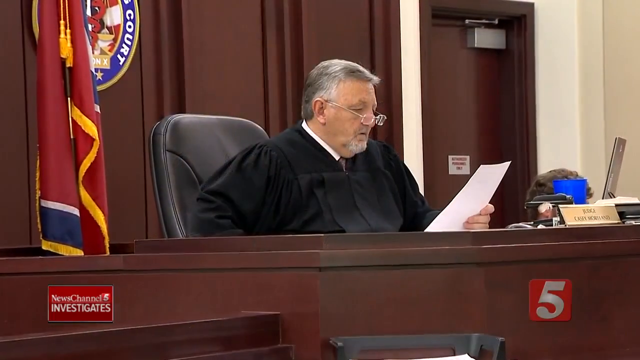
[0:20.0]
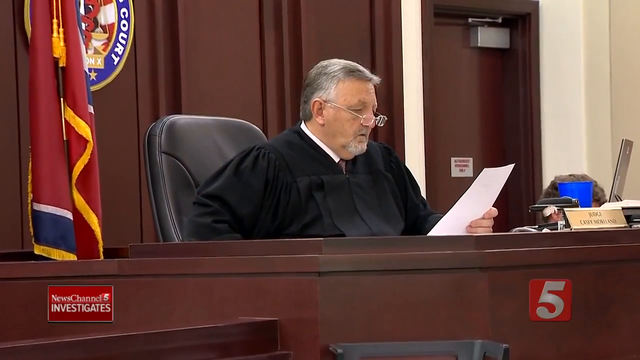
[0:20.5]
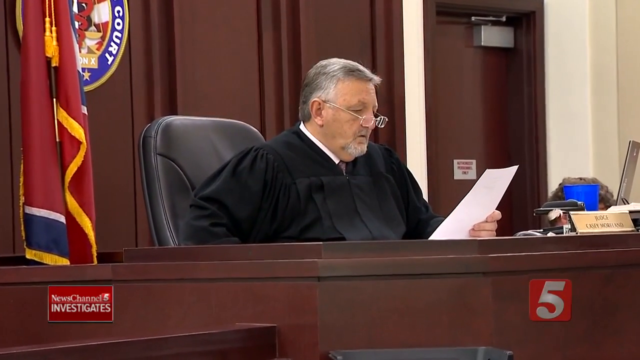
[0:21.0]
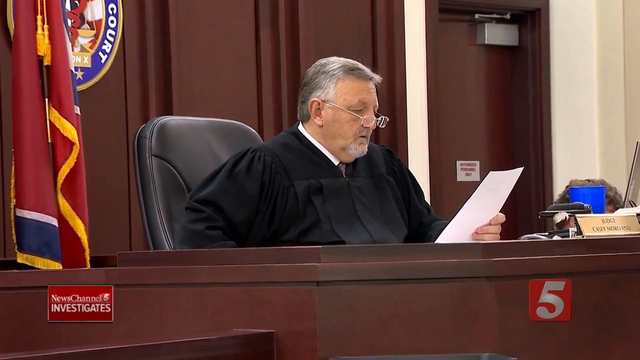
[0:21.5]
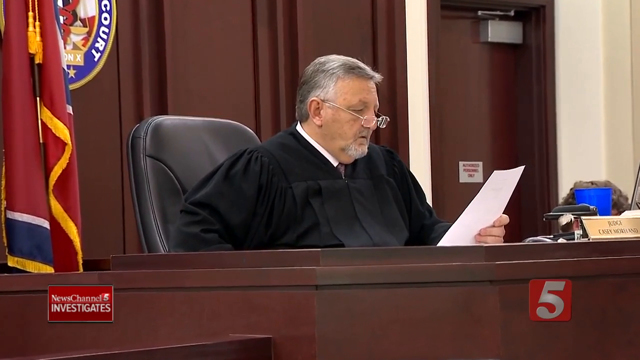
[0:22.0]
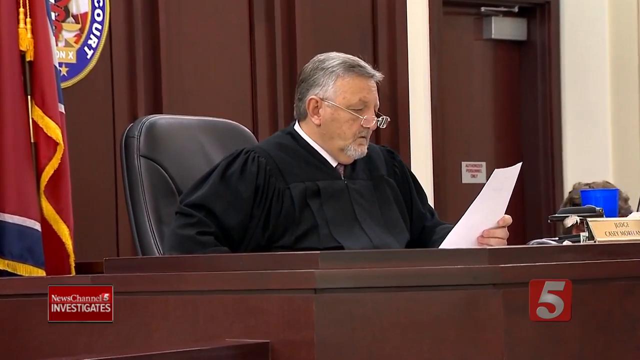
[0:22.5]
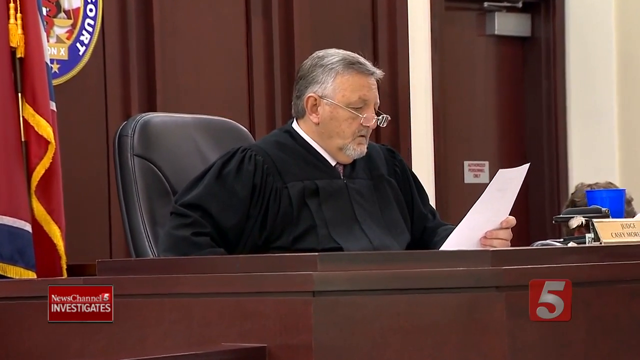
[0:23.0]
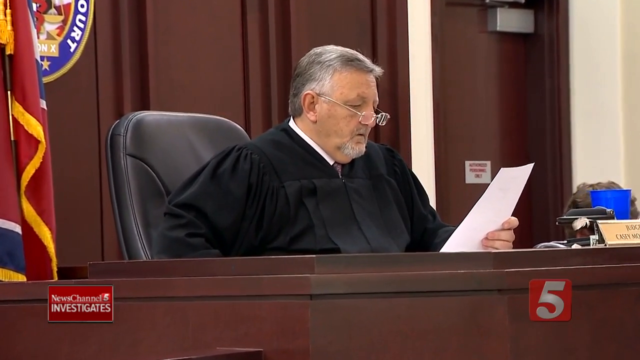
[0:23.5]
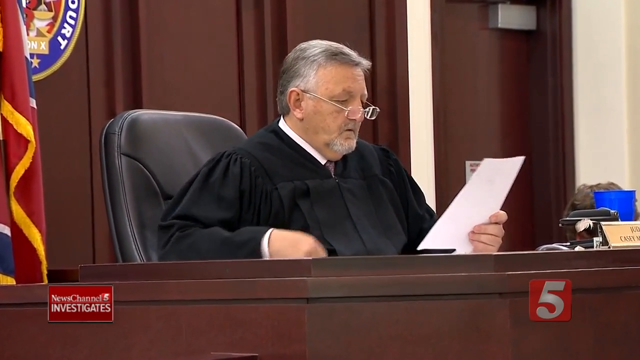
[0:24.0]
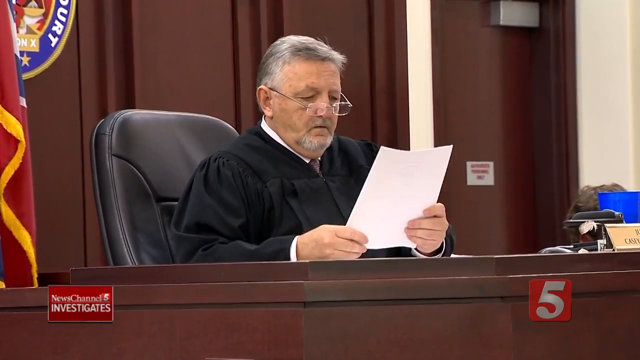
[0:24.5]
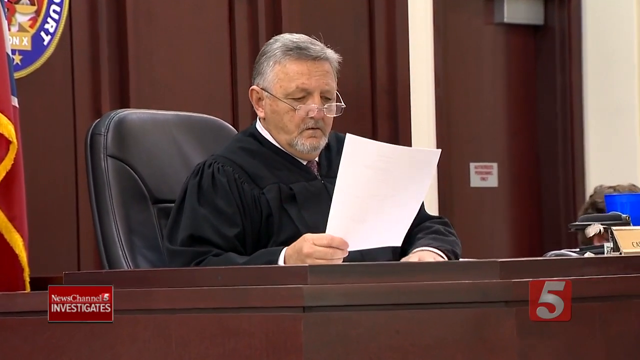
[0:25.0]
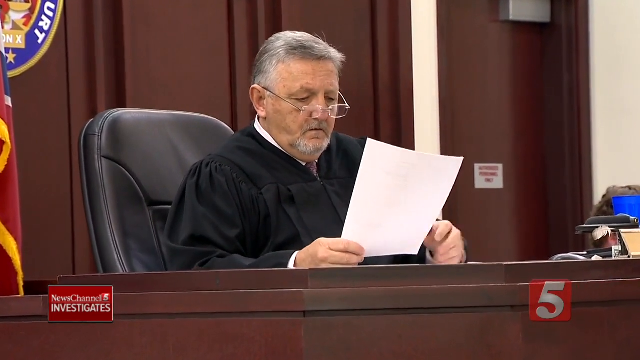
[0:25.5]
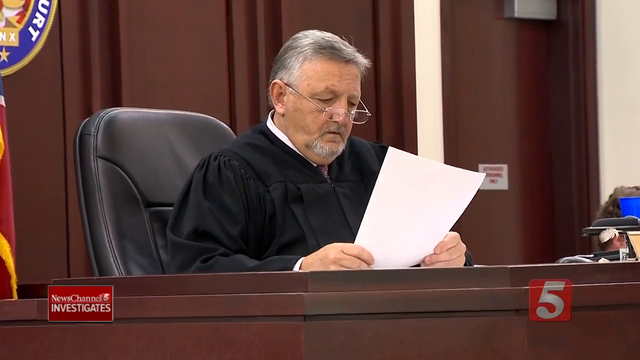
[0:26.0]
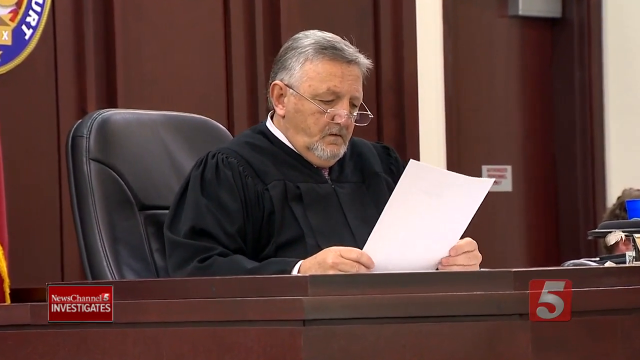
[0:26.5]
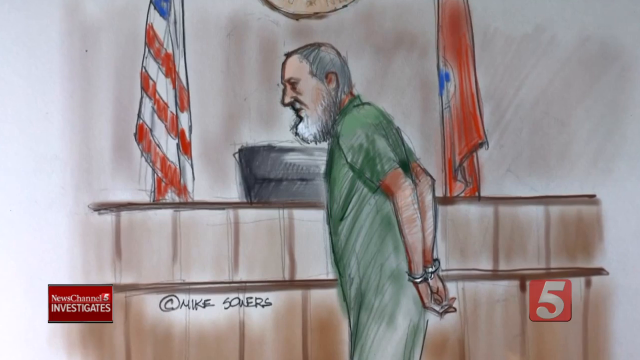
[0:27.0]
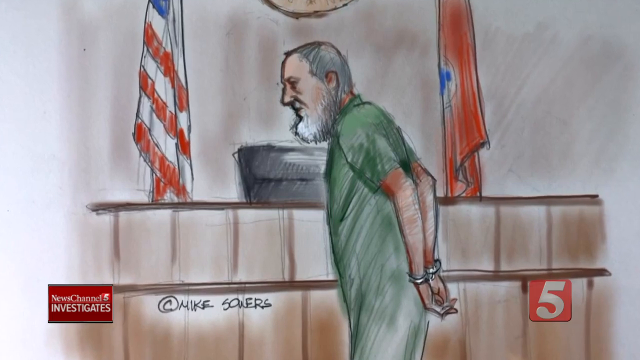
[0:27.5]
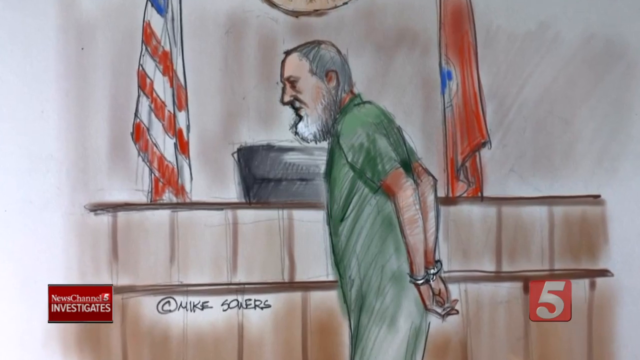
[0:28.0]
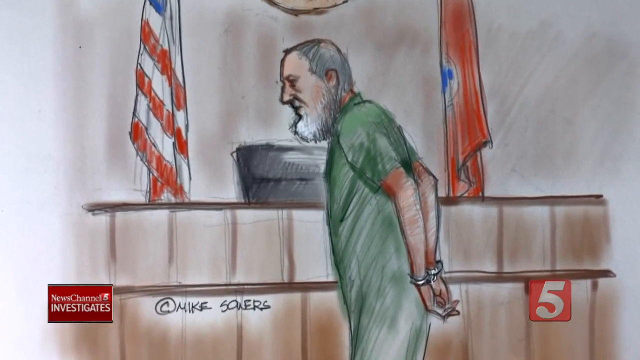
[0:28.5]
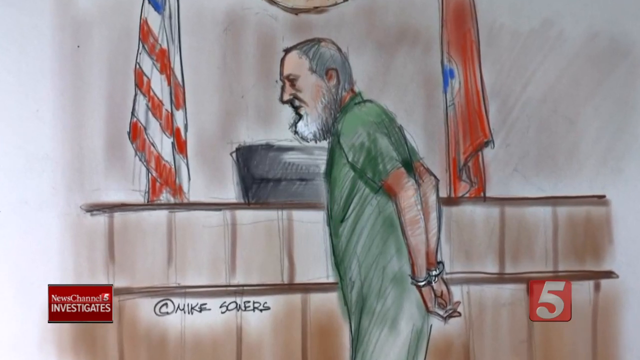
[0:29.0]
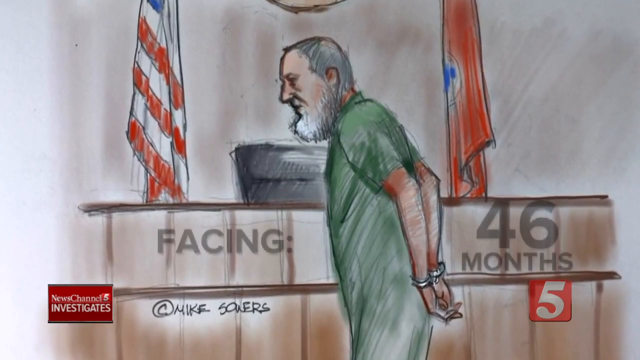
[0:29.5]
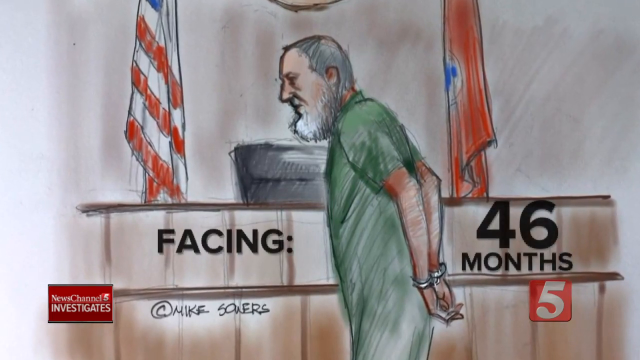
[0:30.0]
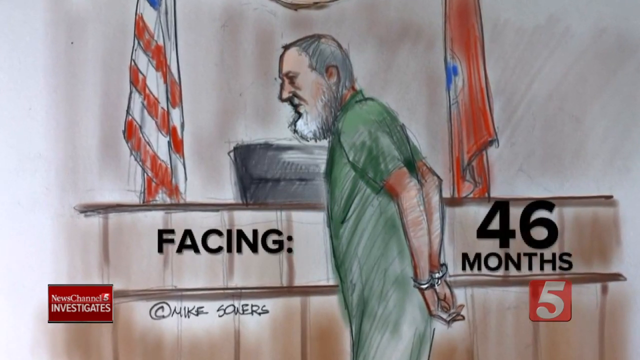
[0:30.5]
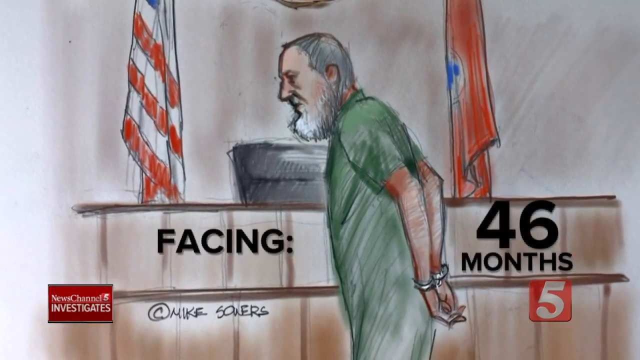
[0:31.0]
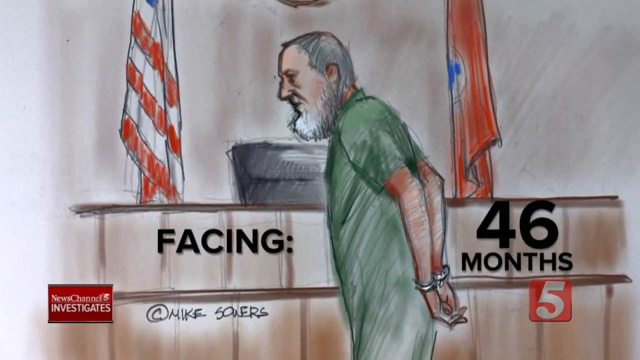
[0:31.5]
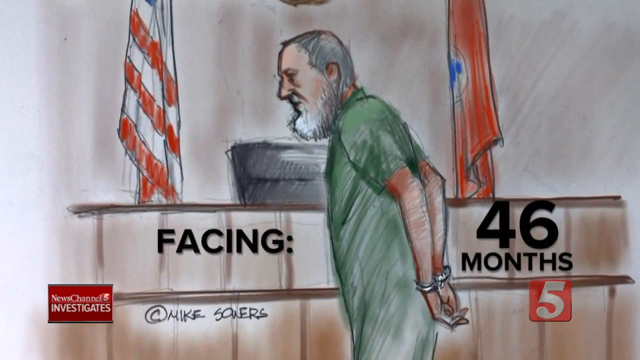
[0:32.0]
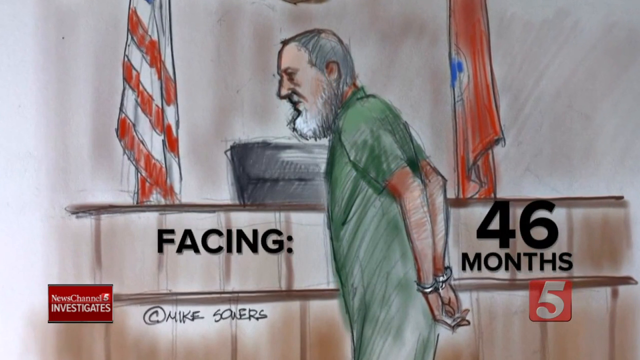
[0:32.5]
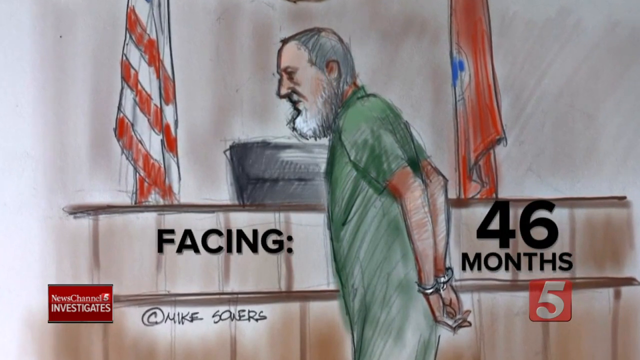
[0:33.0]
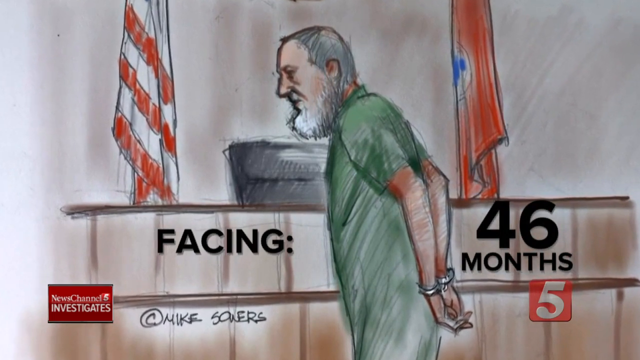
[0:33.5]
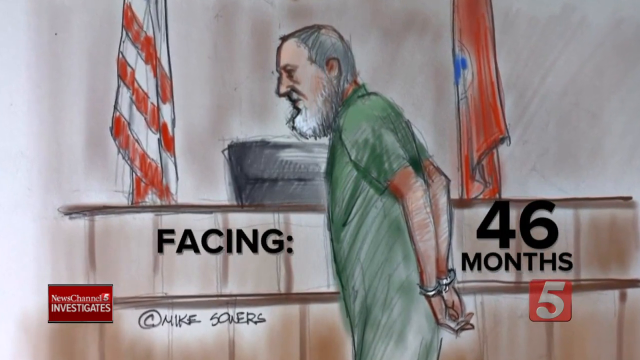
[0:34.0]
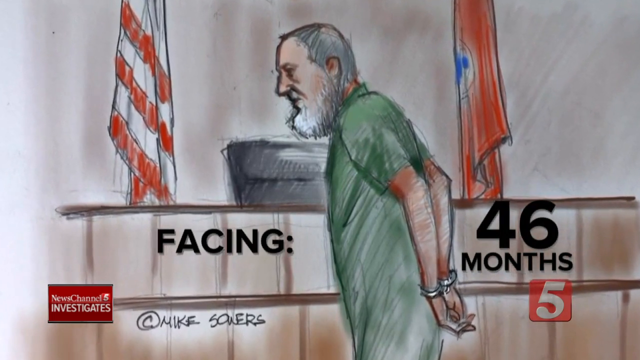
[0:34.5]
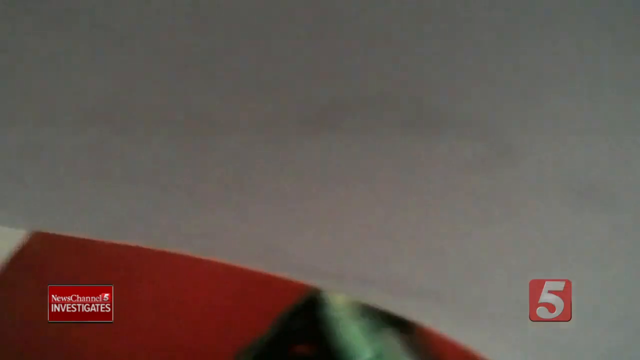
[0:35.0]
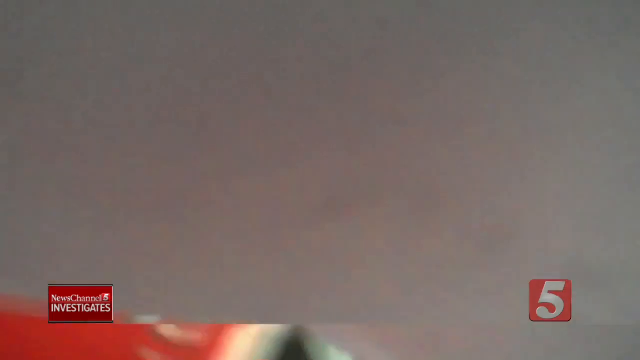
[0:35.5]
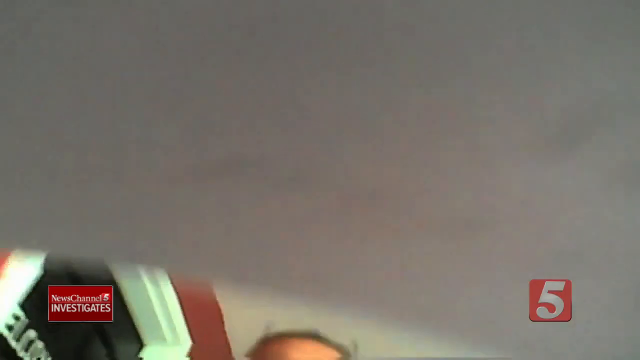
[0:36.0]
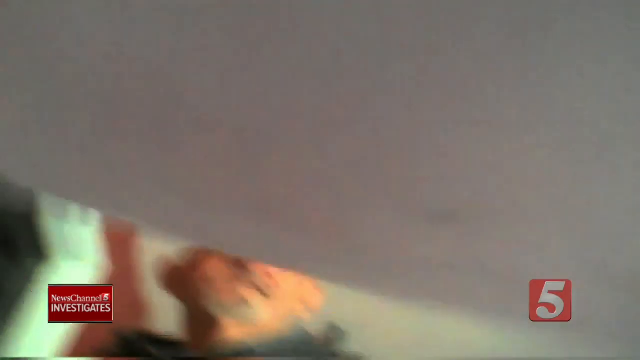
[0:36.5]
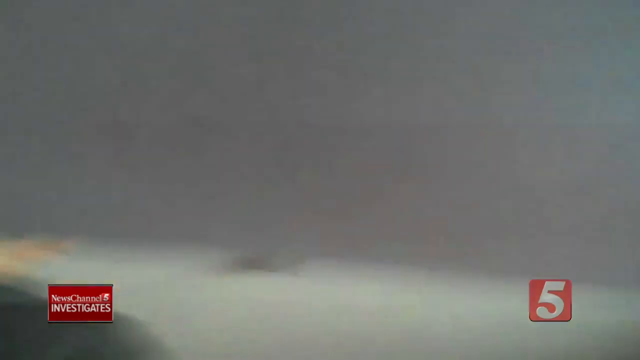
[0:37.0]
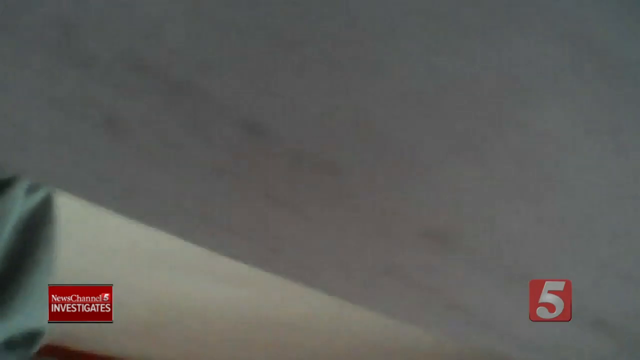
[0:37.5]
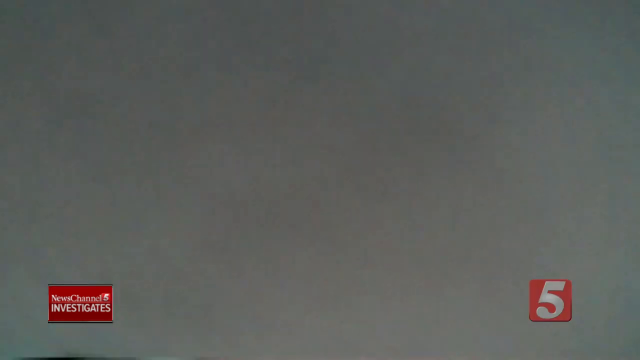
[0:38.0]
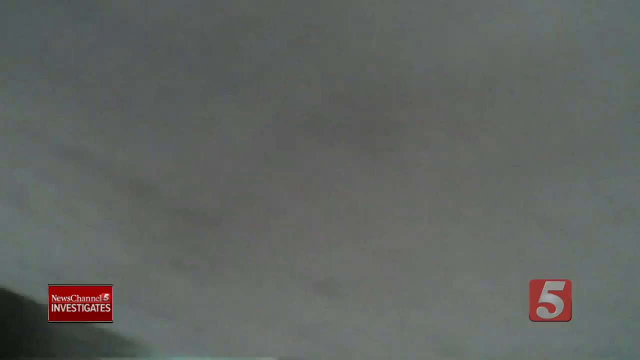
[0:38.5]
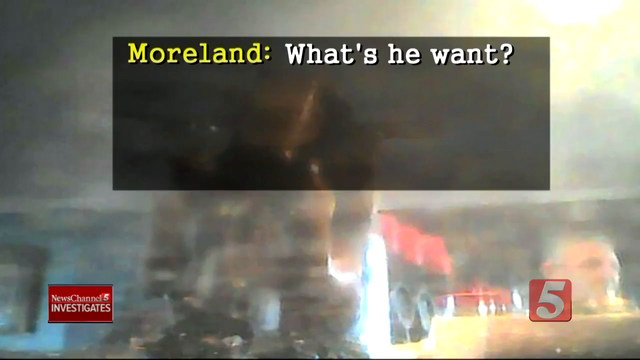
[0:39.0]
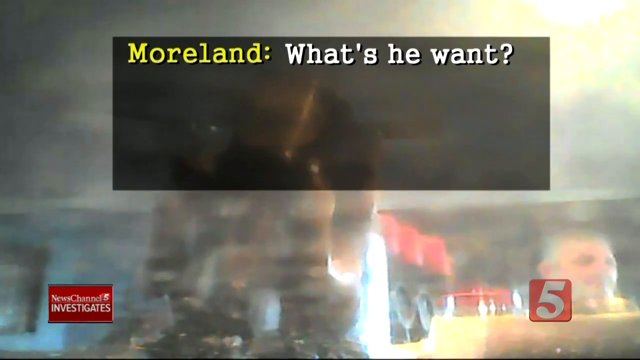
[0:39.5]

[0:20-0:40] The judge sits behind the courtroom bench in a black chair, holding a document in his left hand, his glasses on the tip of his nose. As he intently reads, the camera pans toward him. He brings up his right hand to hold the document with both hands, drops his left hand briefly and rubs it on the desk, then grabs the document with both hands again. Next comes a courtroom illustration of a man resembling the judge, with gray beard and hair, in a green jumpsuit with his hands handcuffed behind his back. The illustration shows a courtroom bench with an empty black chair; the American flag is on the left-hand side of the chair and a flag of unknown origin on the right. A caption appears in black lettering, "FACING" to the left of the man and "46 MONTHS" to his right, as the camera pans forward toward him. The video shifts quickly to what appears to be a piece of paper moving up and down, with a man's face briefly visible underneath it. A caption then appears: "Moreland" in yellow lettering, and next to it in white, "What's he want?"